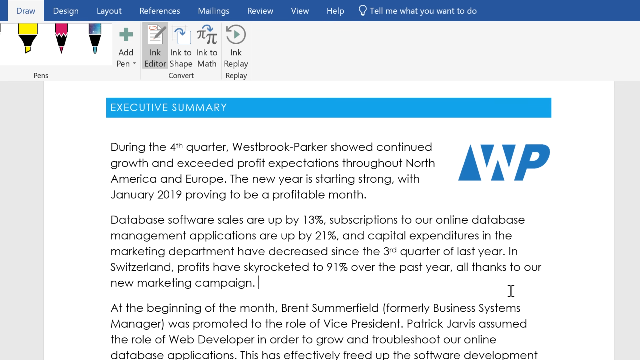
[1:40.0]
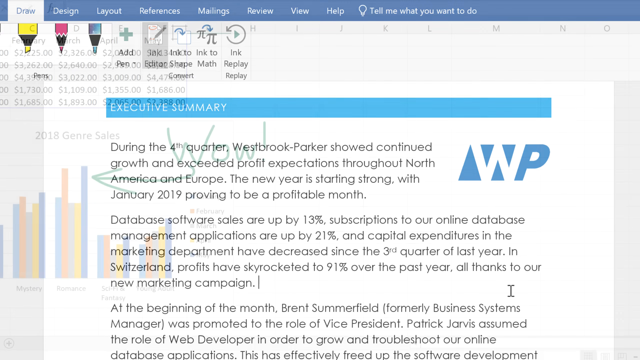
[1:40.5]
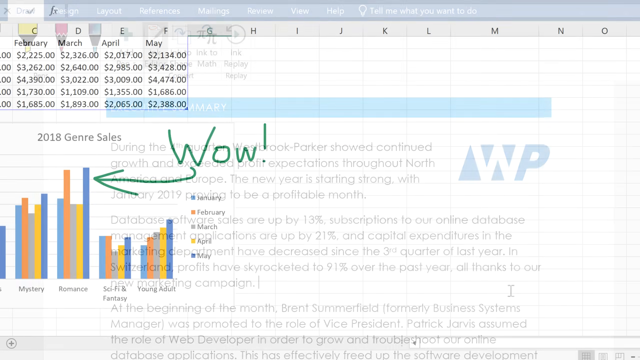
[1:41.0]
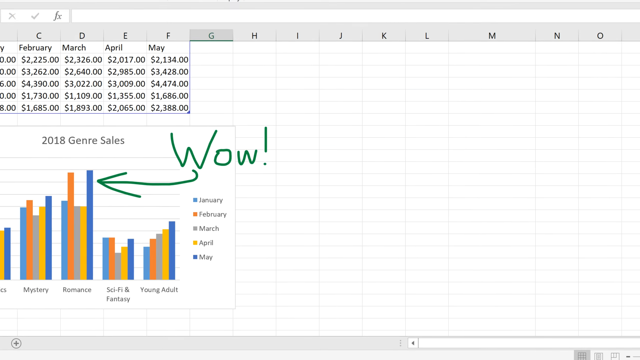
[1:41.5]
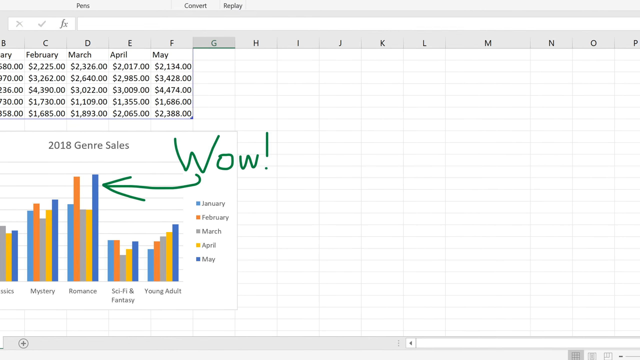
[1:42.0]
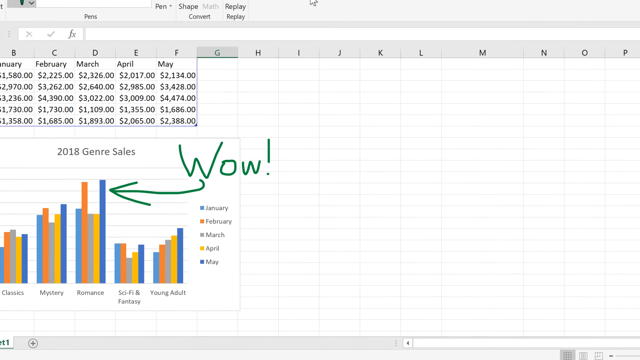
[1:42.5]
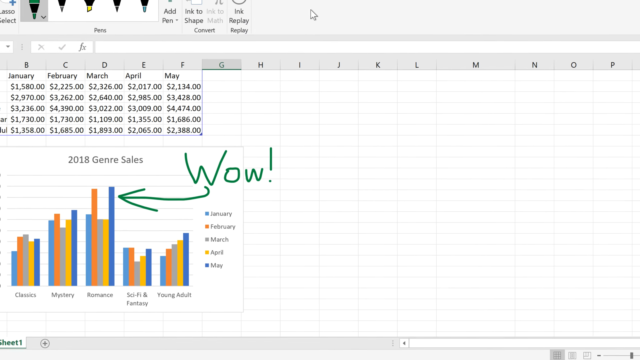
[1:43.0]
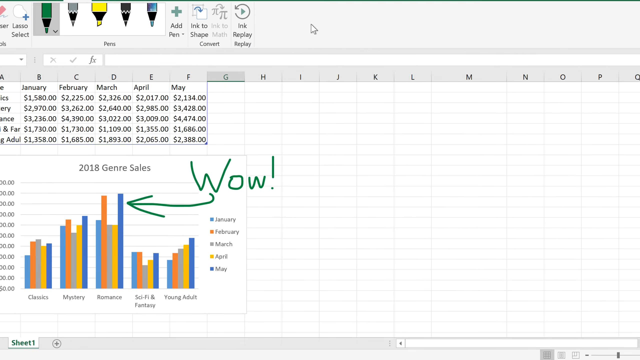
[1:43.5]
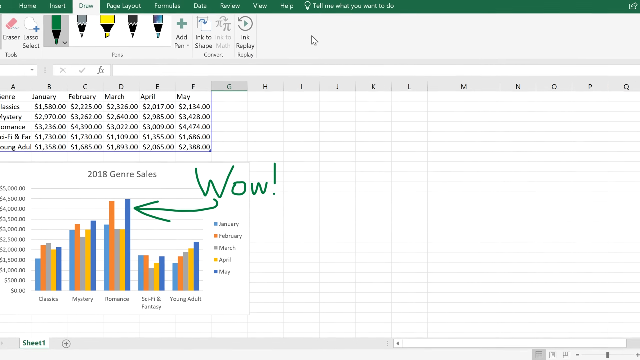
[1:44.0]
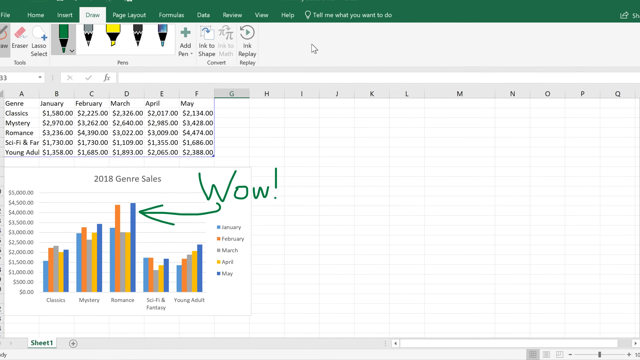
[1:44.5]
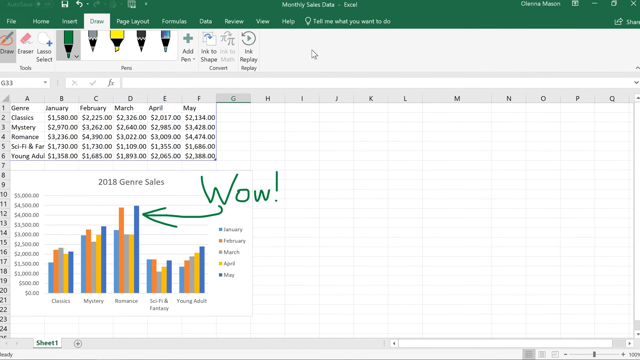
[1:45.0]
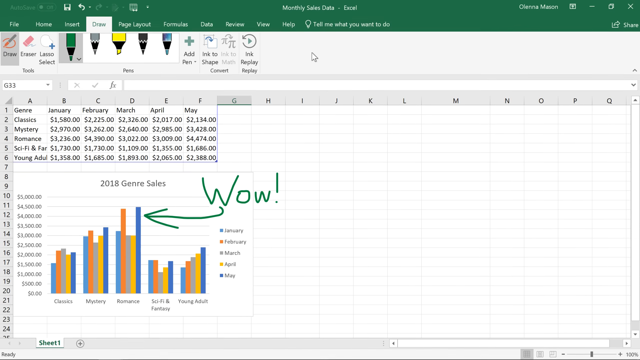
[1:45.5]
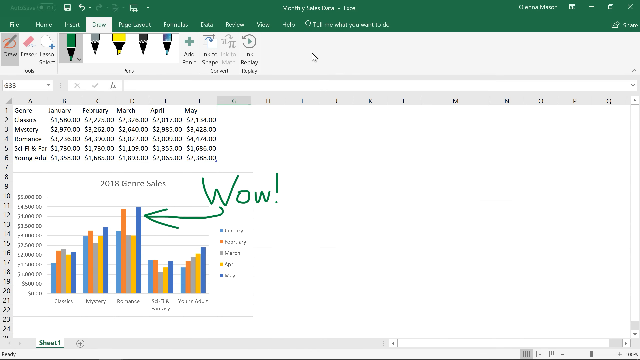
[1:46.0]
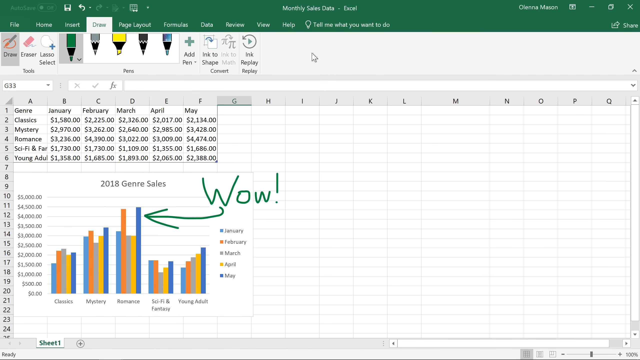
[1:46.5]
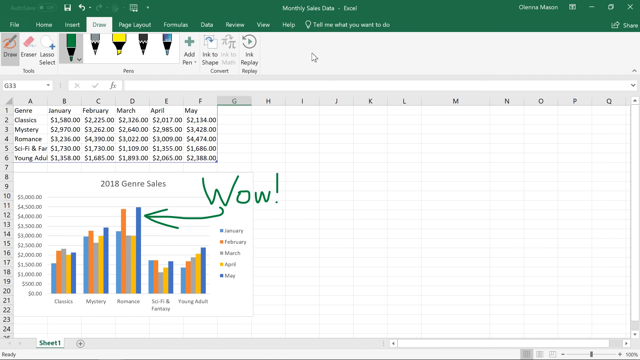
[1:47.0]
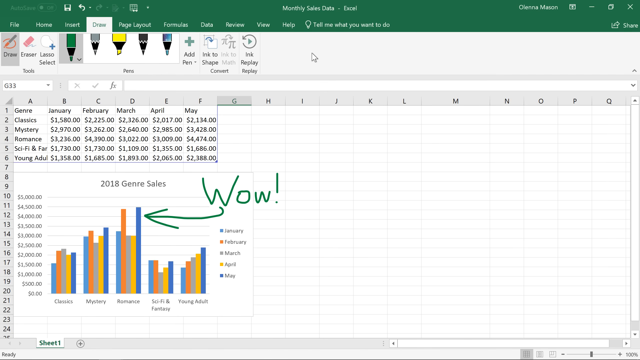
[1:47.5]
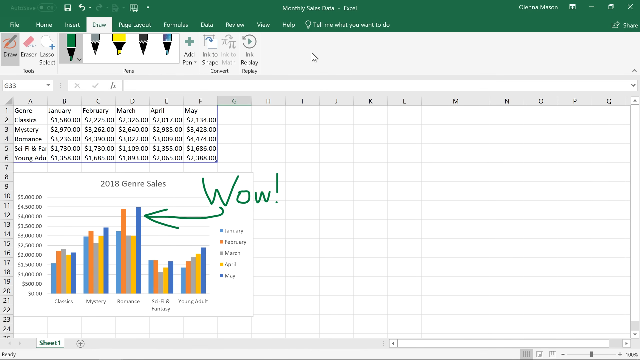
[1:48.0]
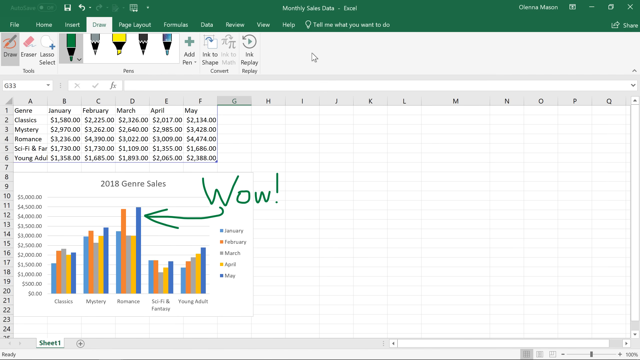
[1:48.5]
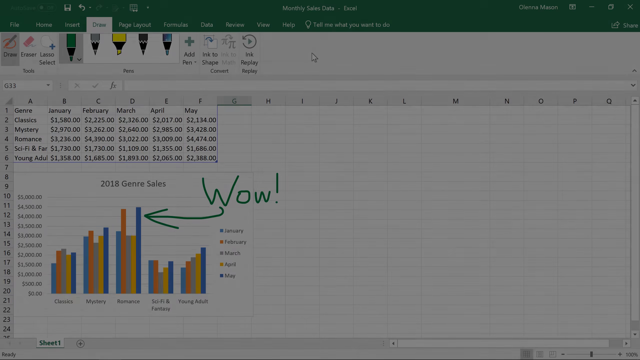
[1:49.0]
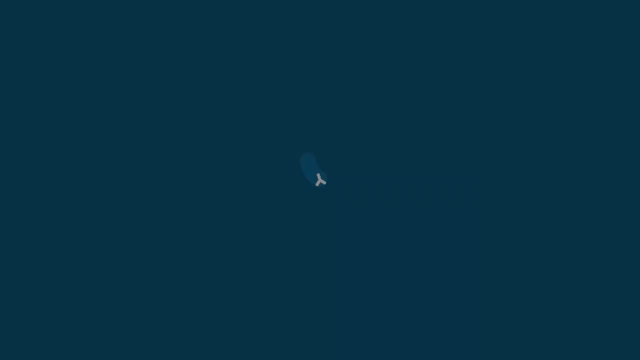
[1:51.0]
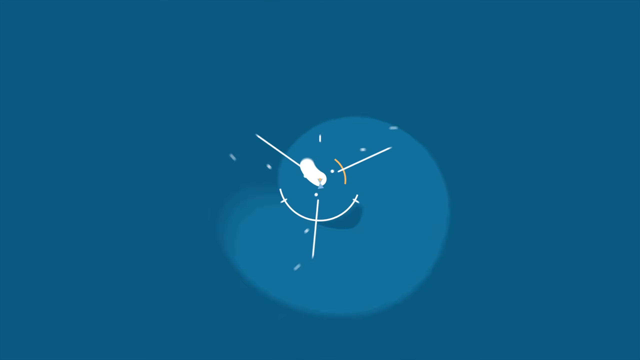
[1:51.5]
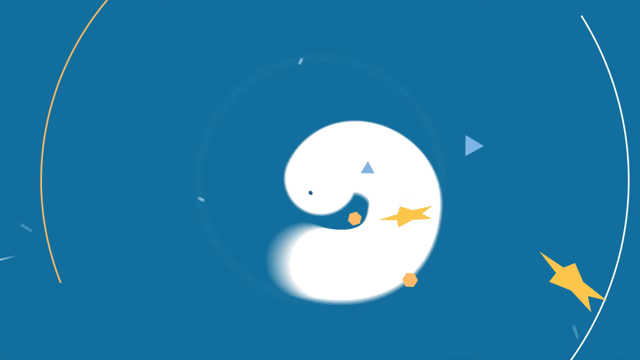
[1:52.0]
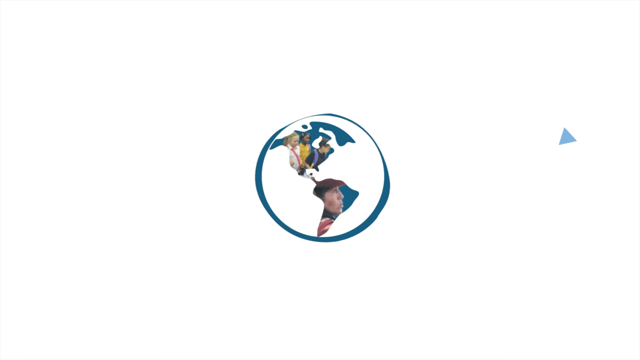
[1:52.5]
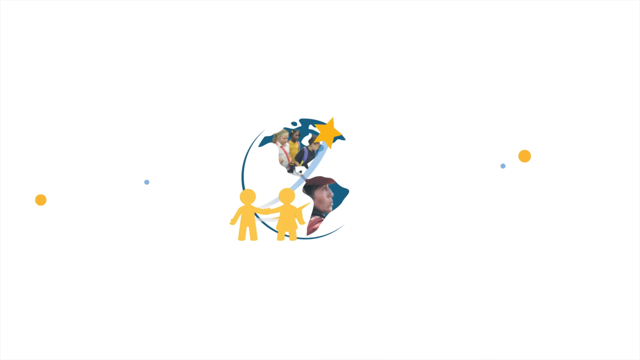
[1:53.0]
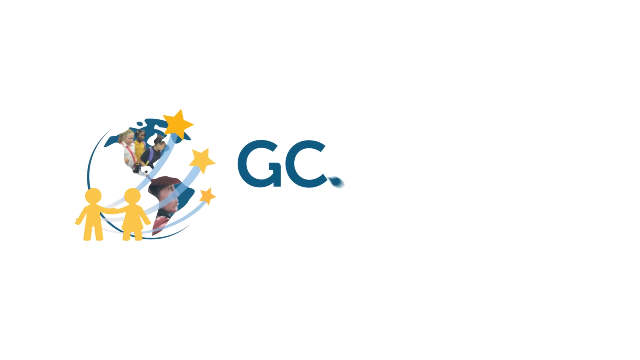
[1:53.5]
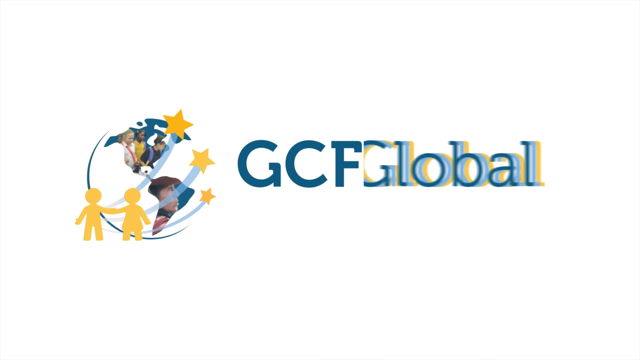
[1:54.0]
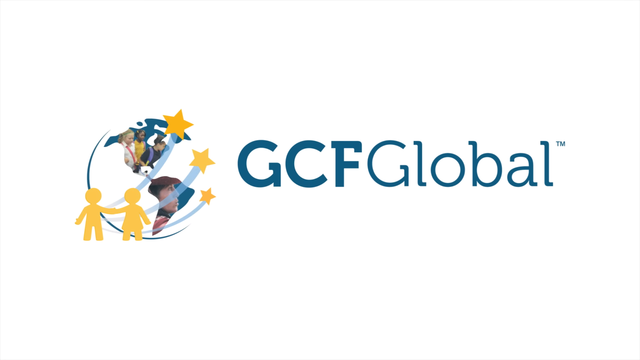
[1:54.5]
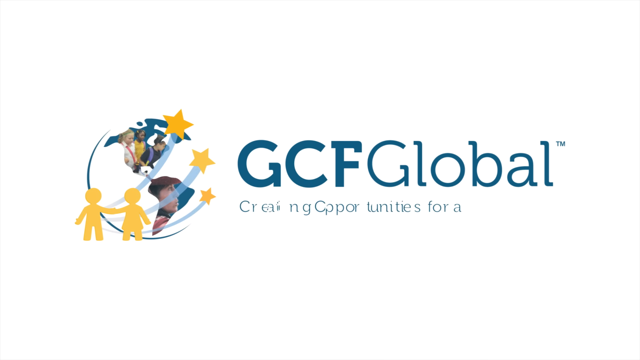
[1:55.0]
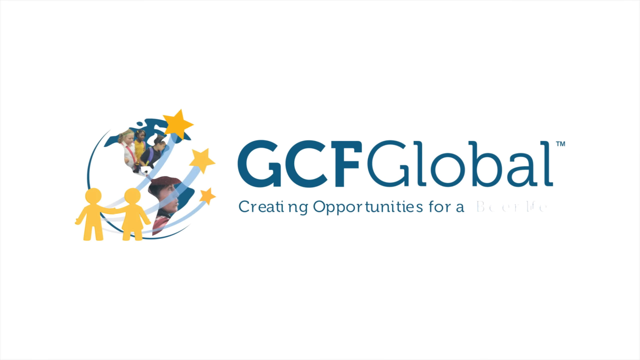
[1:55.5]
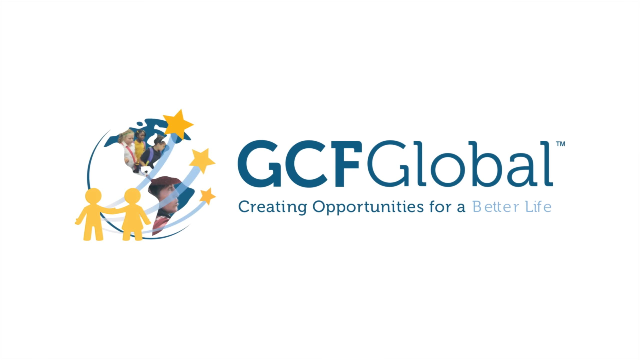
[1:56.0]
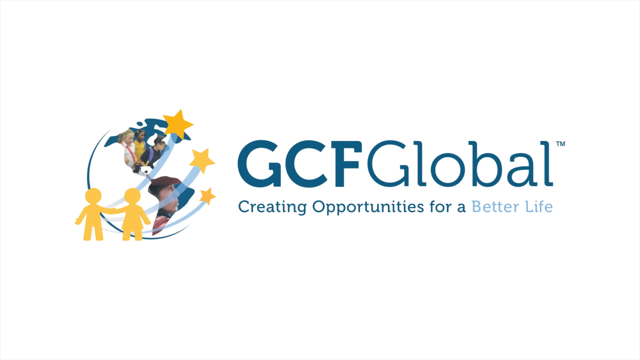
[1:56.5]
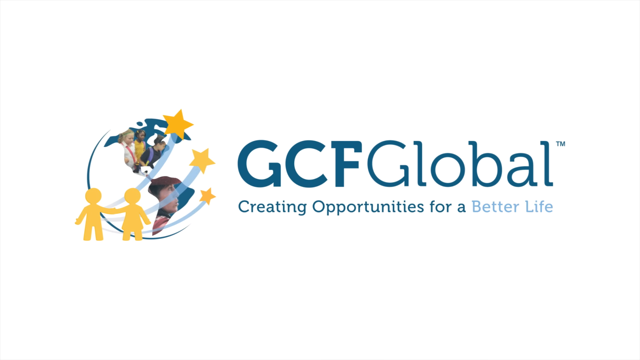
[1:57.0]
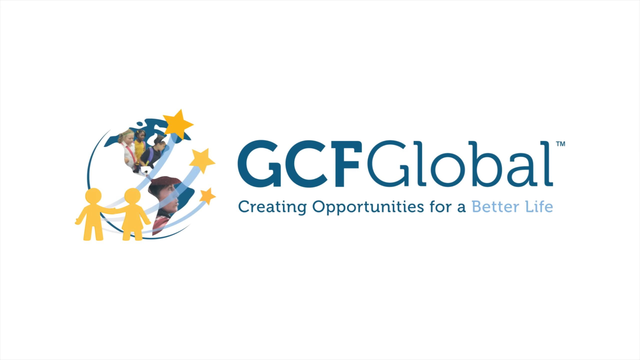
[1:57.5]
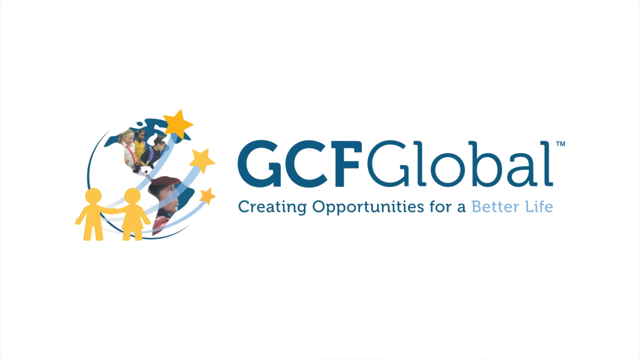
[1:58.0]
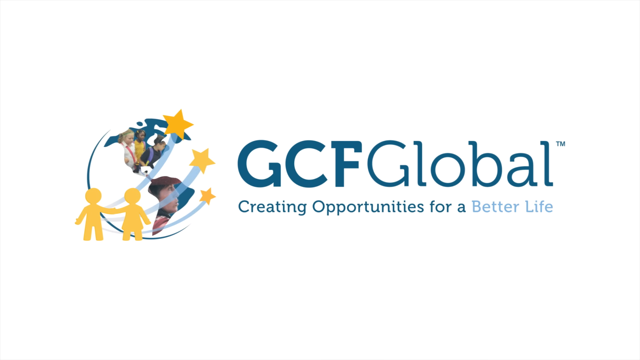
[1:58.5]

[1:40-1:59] The view goes from the Word document back to a spreadsheet. Several columns, up into column F, have months across the top: January, February, March, April and May, with dollar figures underneath each column. Below that is a chart with the header "2018 genre sales." It looks like a marker has been used to draw the word "wow" with an exclamation point and an arrow pointing toward part of the graph. The camera is kind of zooming out a little during this part. The picture then fades to a kind of black screen, which turns into a blue screen with light figures coming toward the viewer. The words "GCF Global" appear with a logo to the left, almost like the world with two kind of cutout children holding hands and yellow stars around the outside of the globe. Additional words then appear underneath, reading "creating opportunities for a better life."